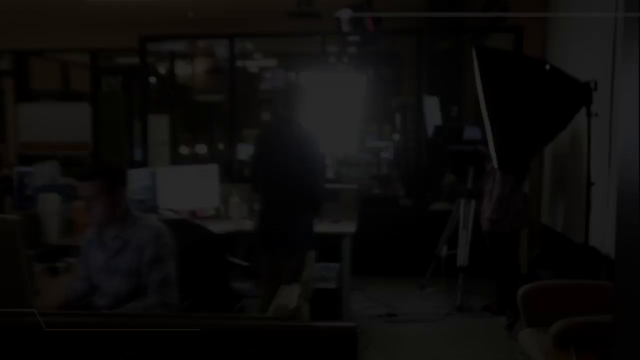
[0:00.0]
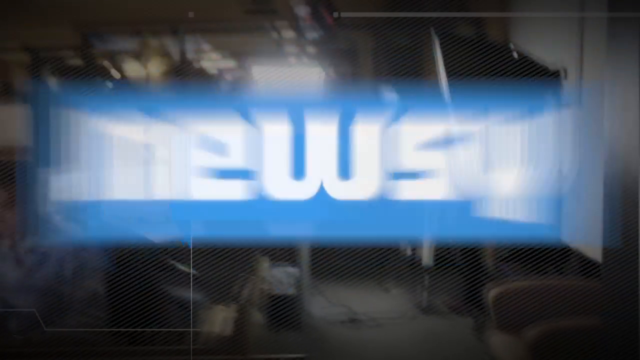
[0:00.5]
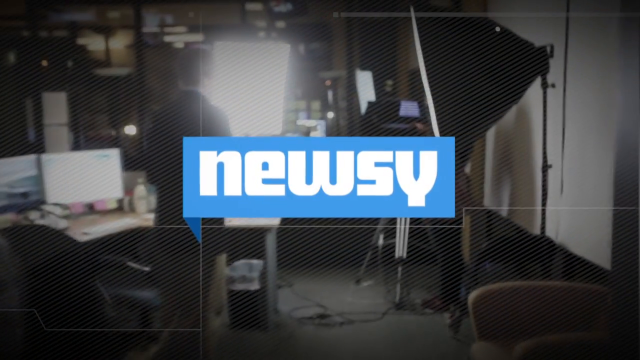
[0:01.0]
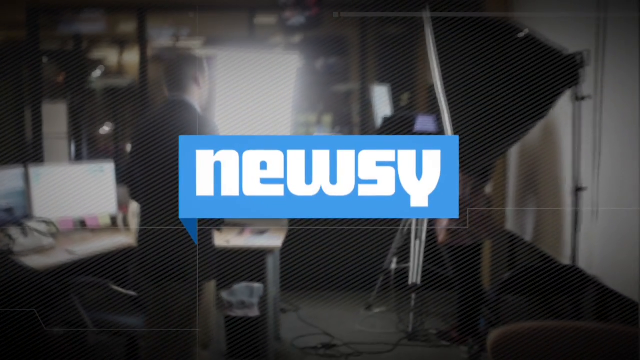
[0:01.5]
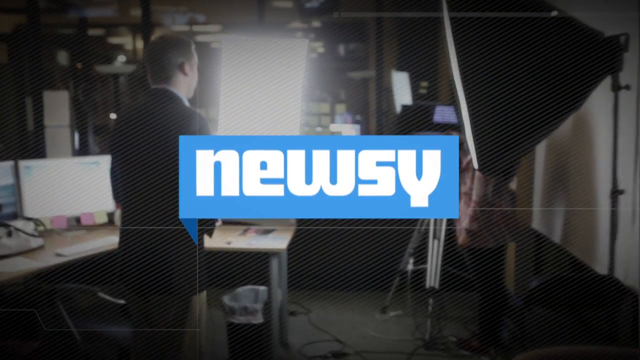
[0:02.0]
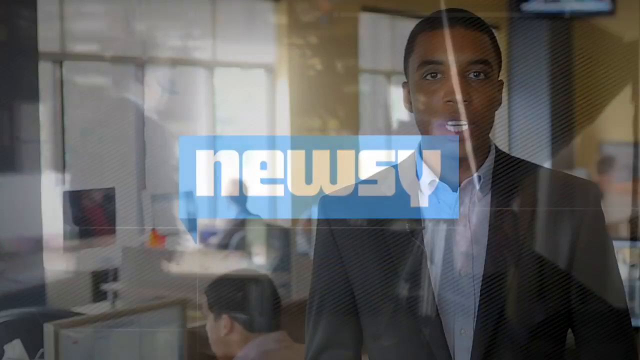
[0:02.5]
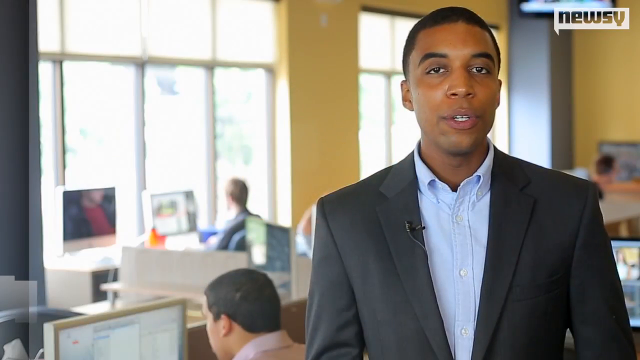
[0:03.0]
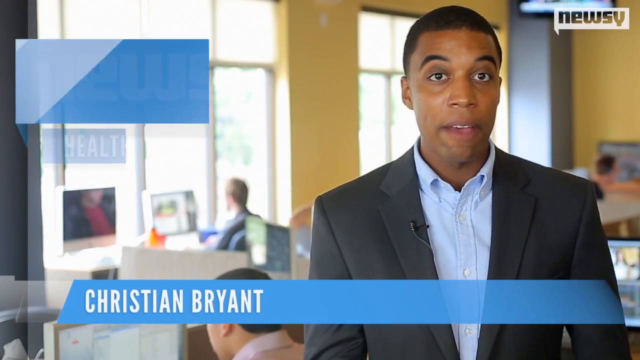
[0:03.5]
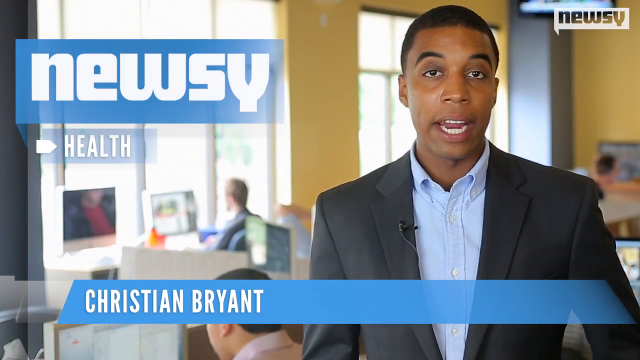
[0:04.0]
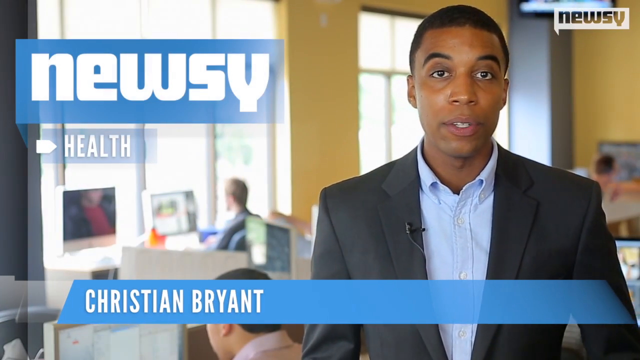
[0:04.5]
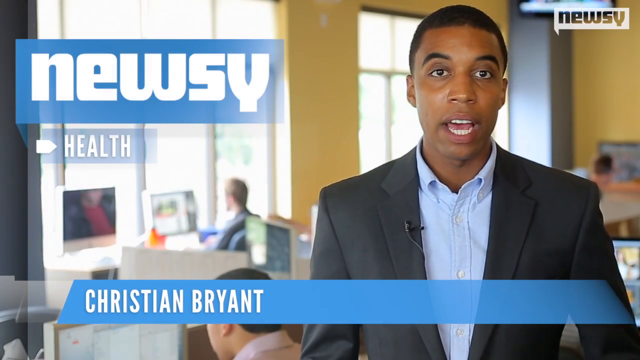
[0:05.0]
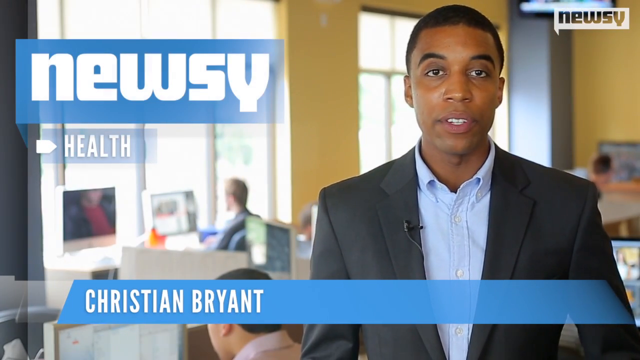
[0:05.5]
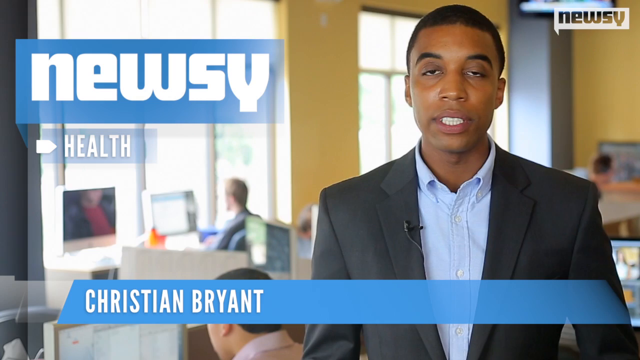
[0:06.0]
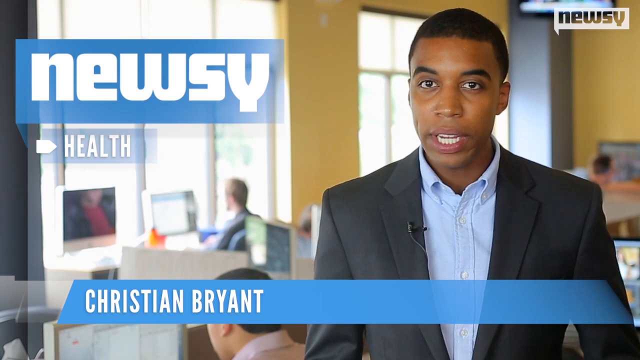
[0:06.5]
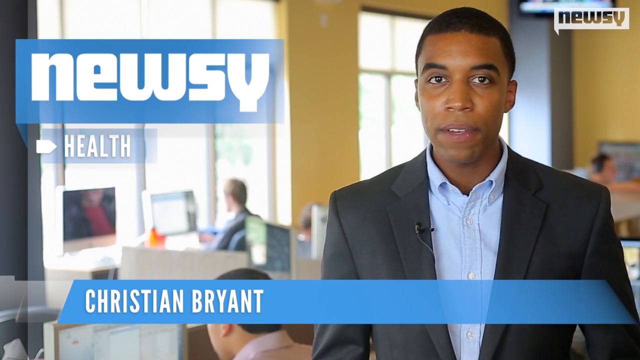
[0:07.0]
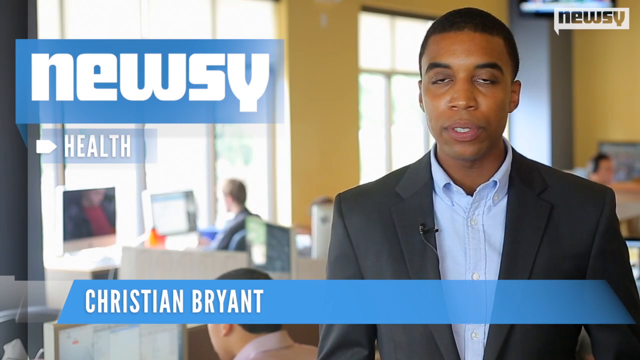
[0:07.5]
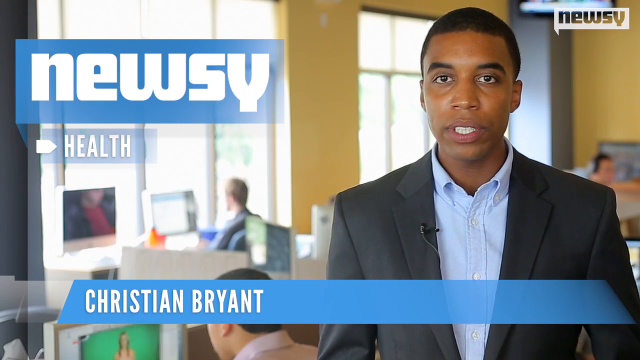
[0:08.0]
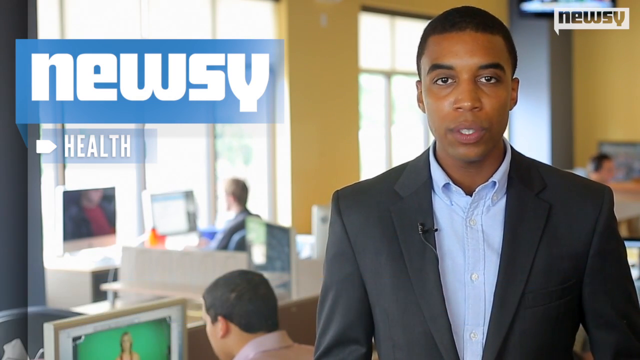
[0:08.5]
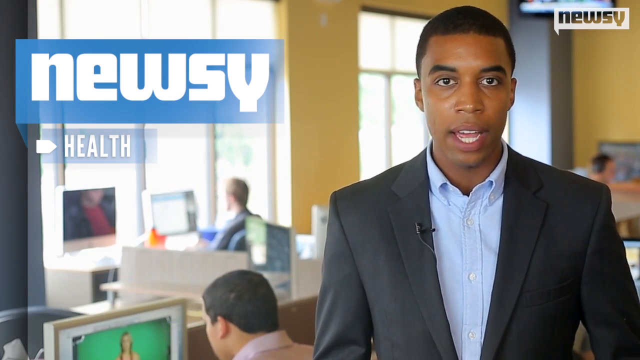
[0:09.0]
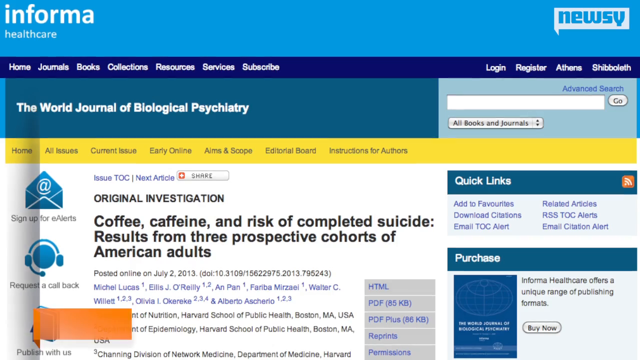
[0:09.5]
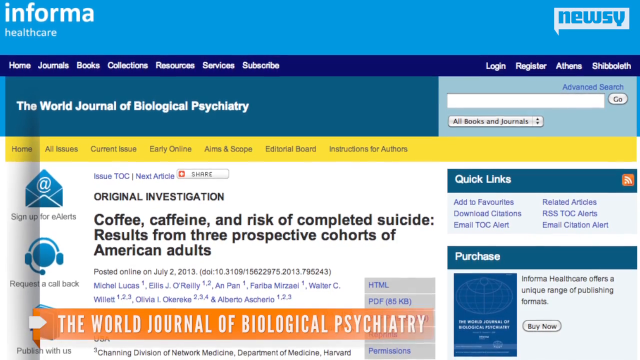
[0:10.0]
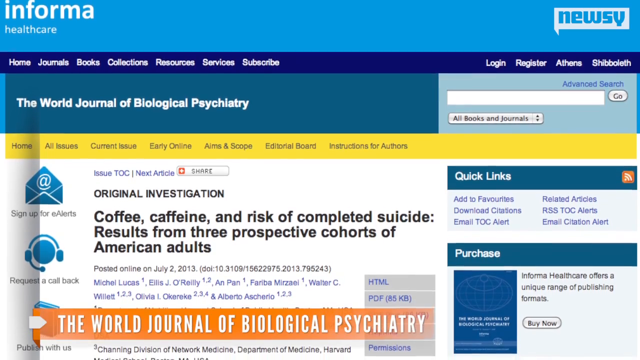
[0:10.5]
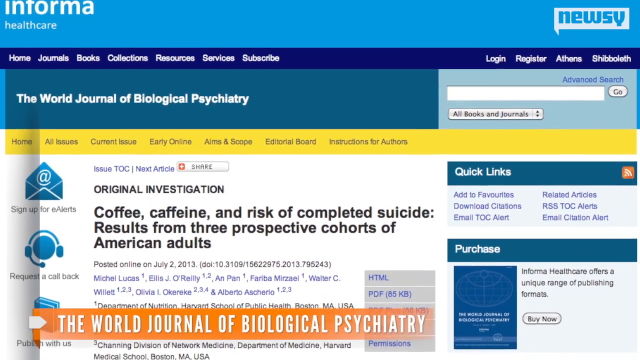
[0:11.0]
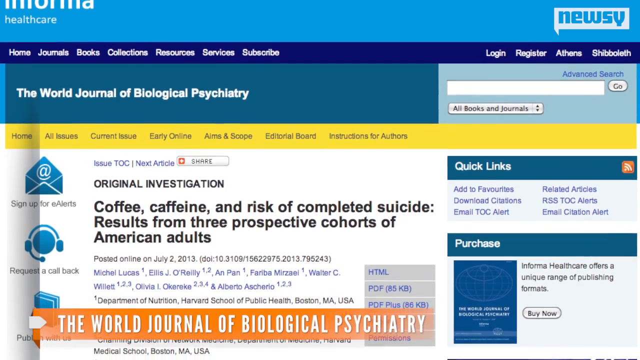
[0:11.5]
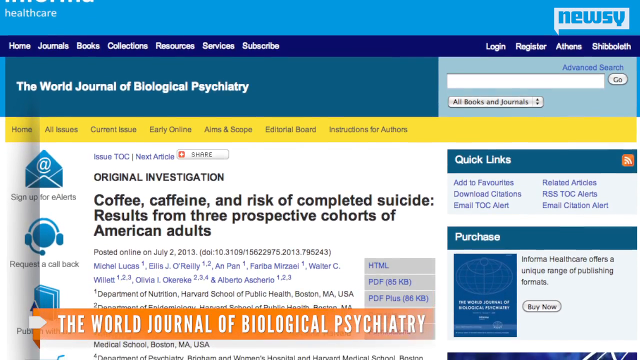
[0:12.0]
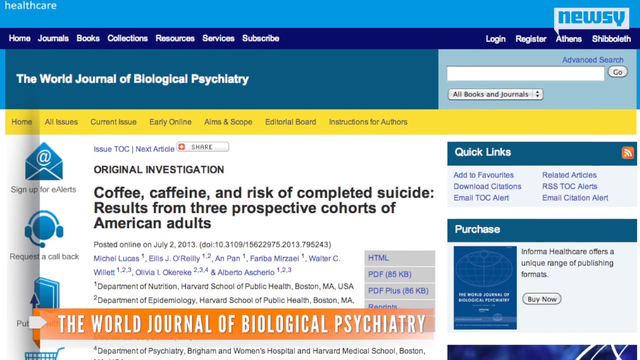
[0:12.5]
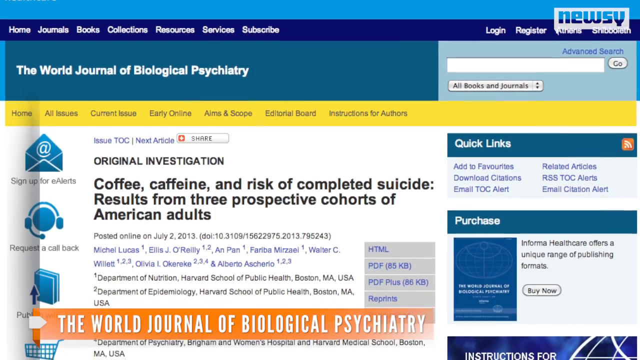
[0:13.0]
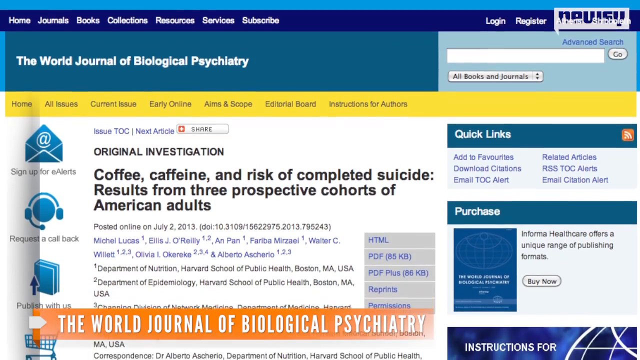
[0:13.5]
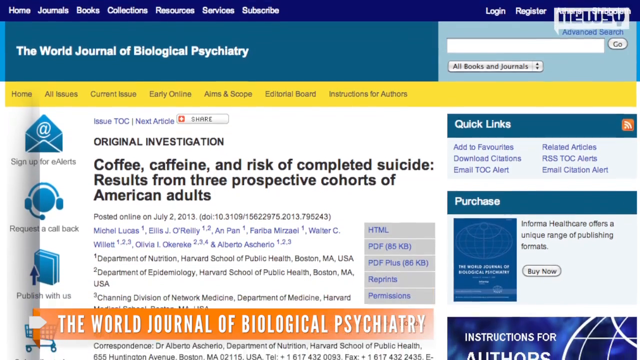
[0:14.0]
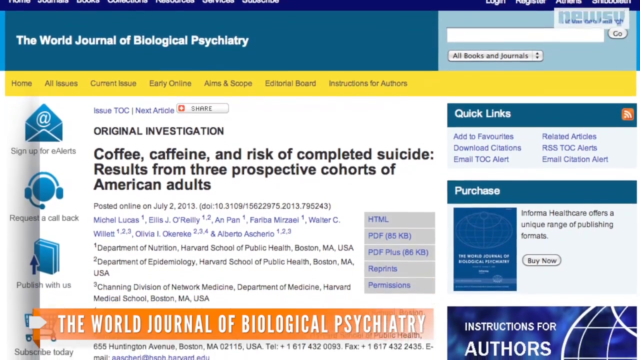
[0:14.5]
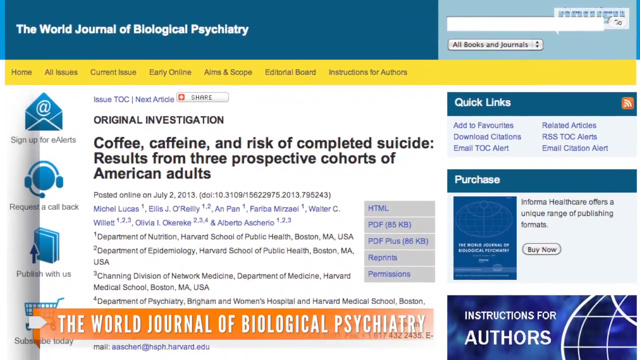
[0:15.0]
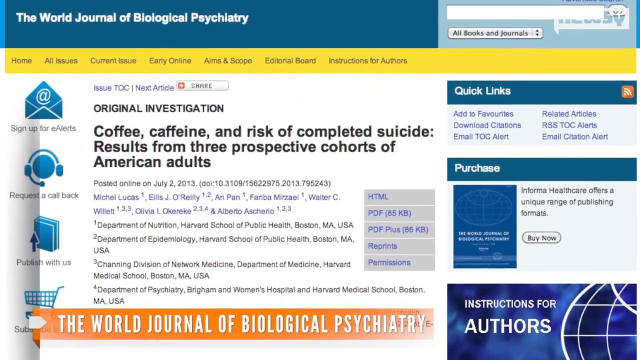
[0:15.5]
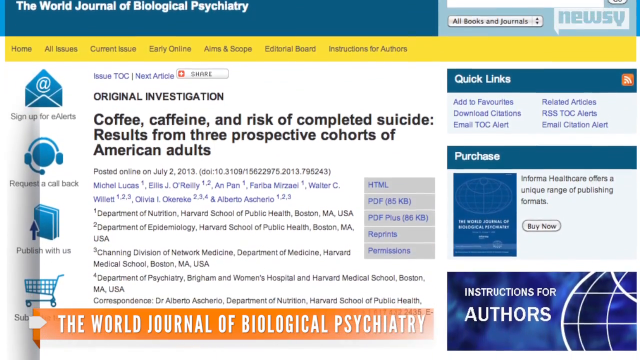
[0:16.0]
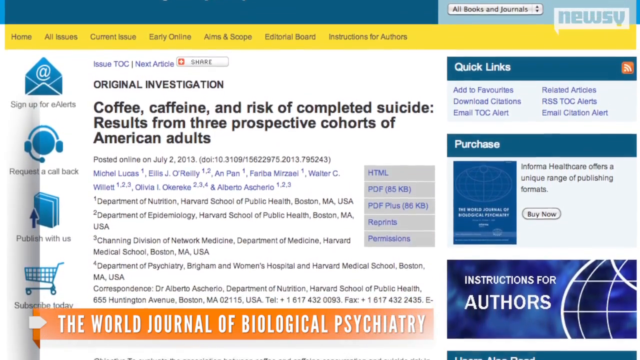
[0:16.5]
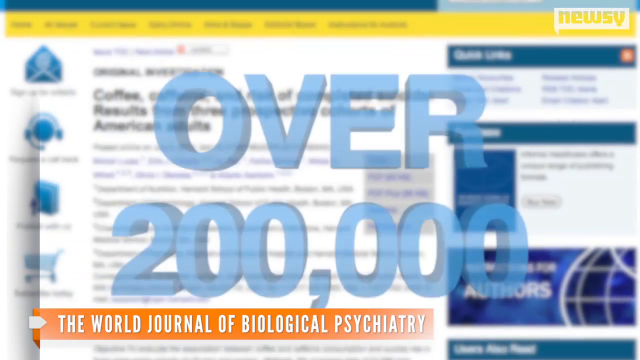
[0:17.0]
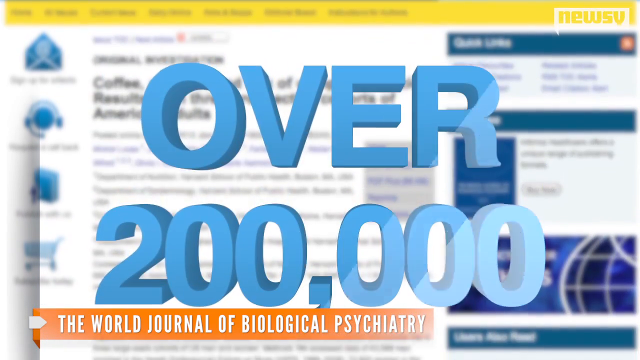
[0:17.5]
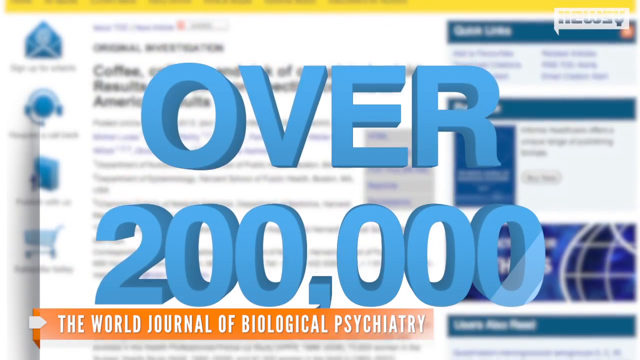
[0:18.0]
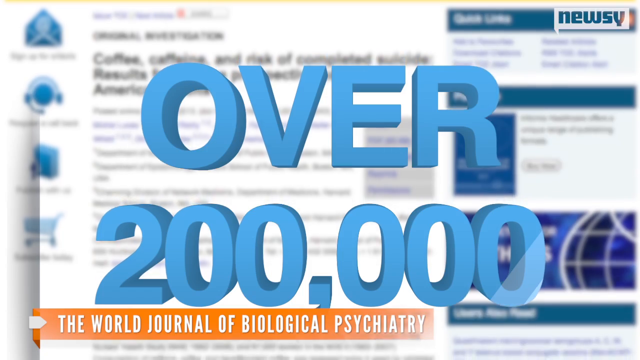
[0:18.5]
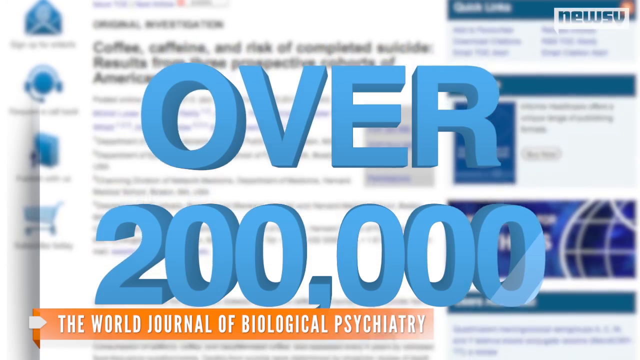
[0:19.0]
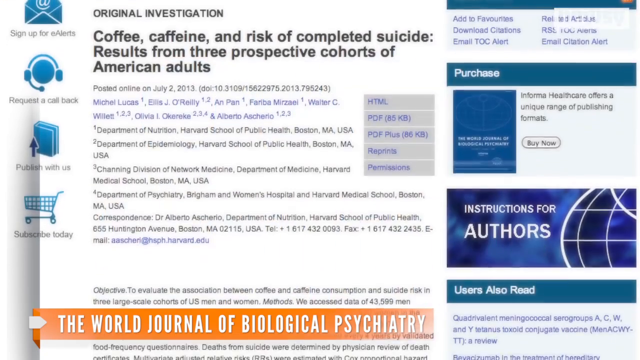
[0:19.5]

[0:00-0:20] Video cameras are visible in what looks like a news station, with a lot of activity, and letters spell out "Newsy." An African American man appears on the right of the screen, wearing a white dress shirt and a gray suit. "Newsy" appears in a speech bubble in the upper right-hand corner, and "Newsy" also appears in a blue rectangle in the upper left-hand corner with "health" underneath it. A caption at the bottom reads "Christian Bryant" in all capital white letters in a blue text box. A page then pops up showing an article titled "Coffee, caffeine and risk of completed suicide results from three prospective cohorts of American adults," with "the World Journal of Biological Psychiatry" at the bottom. The view moves down the page, and then big words pop up reading "over 200,000."